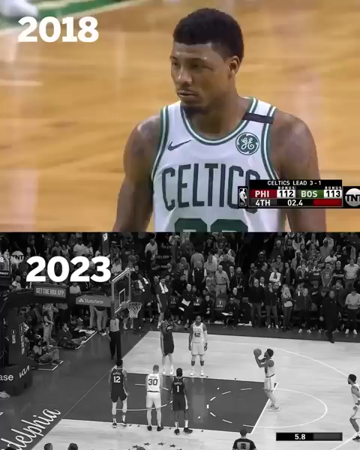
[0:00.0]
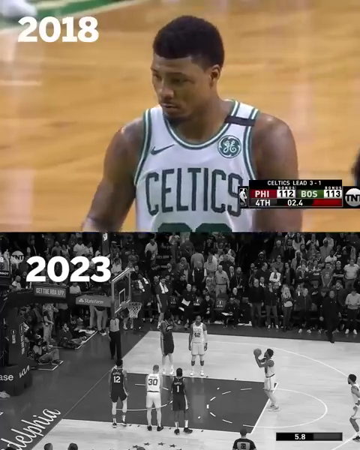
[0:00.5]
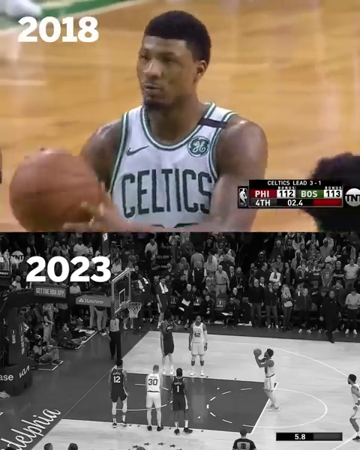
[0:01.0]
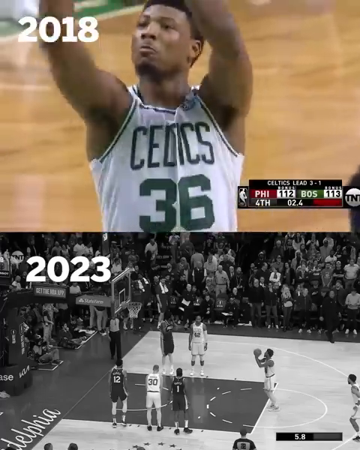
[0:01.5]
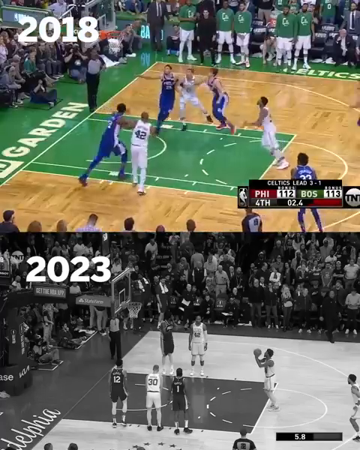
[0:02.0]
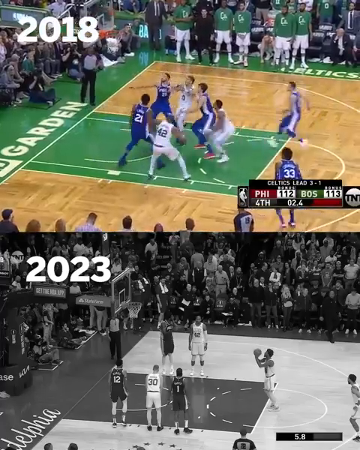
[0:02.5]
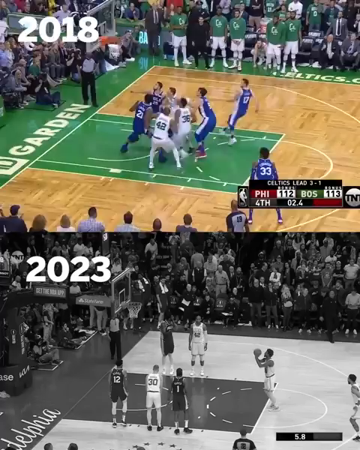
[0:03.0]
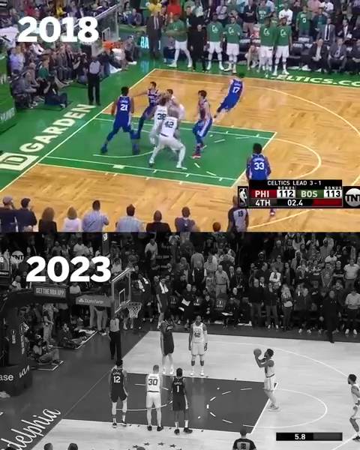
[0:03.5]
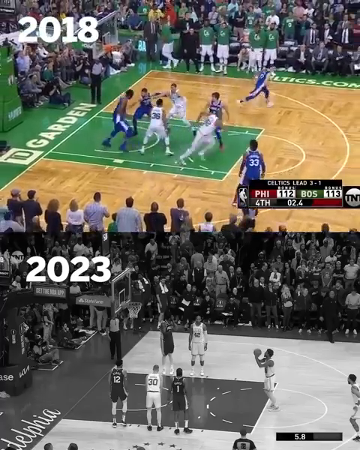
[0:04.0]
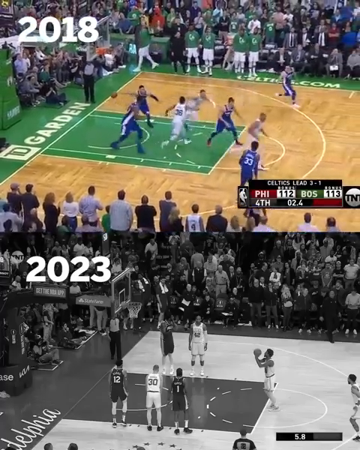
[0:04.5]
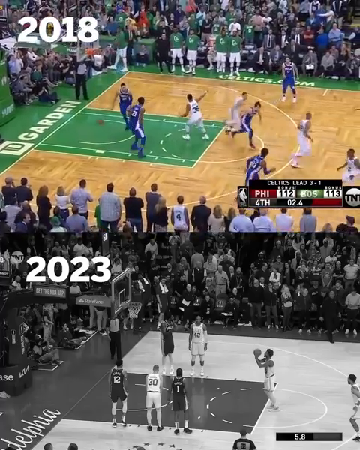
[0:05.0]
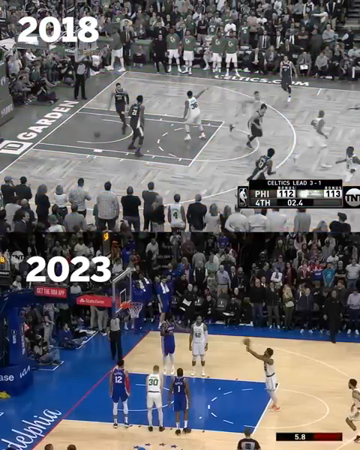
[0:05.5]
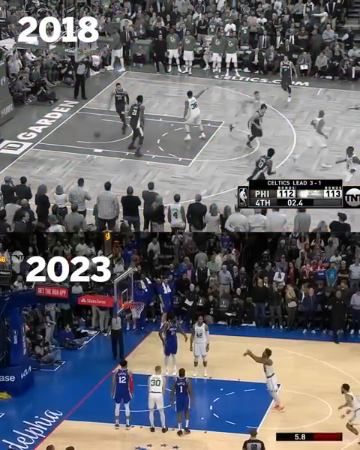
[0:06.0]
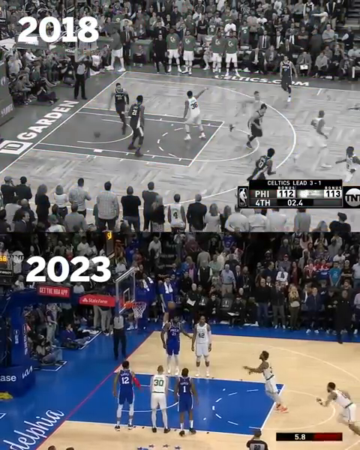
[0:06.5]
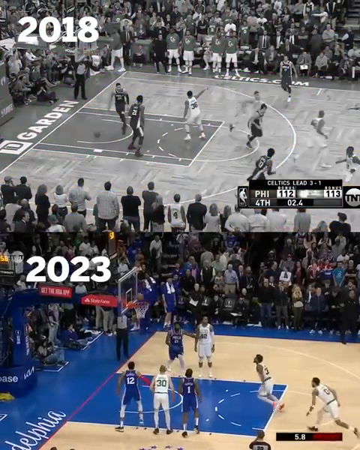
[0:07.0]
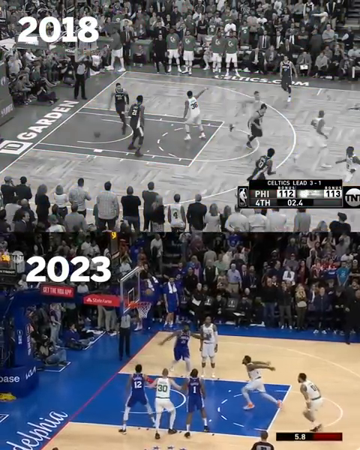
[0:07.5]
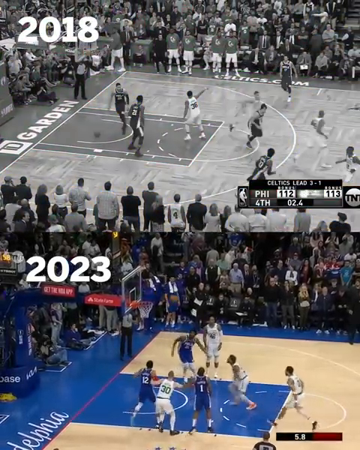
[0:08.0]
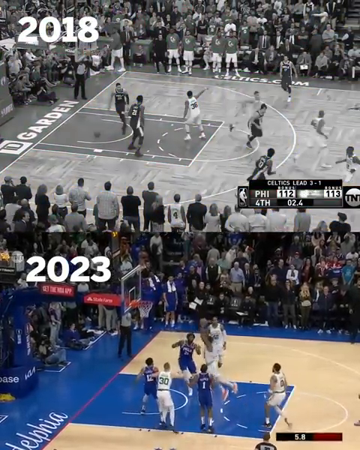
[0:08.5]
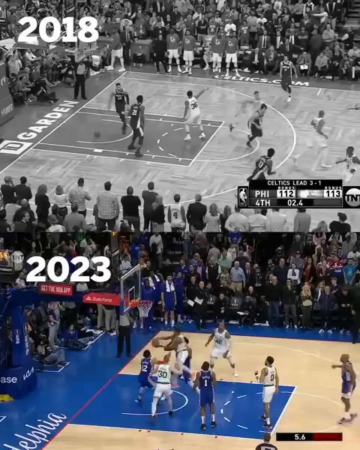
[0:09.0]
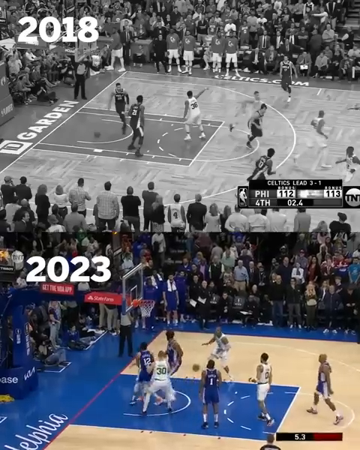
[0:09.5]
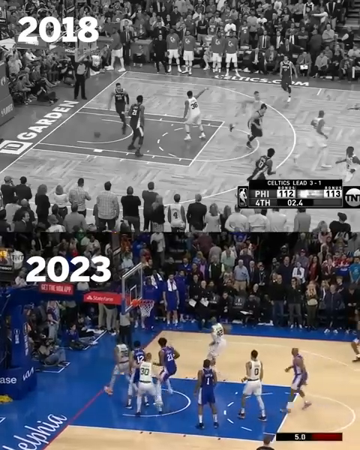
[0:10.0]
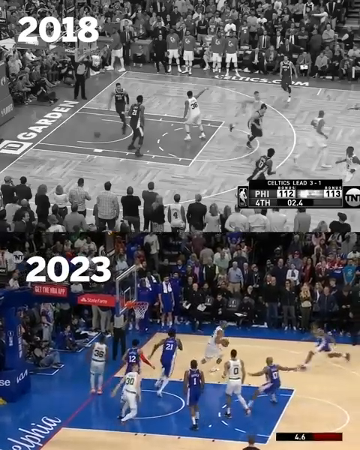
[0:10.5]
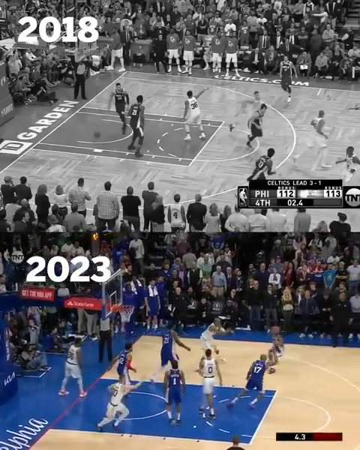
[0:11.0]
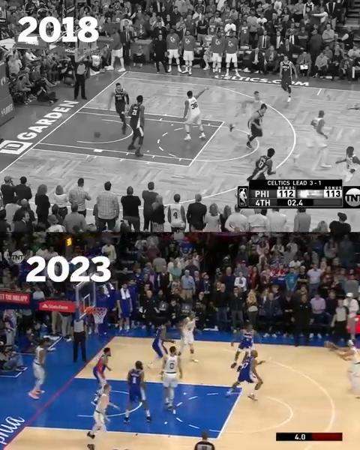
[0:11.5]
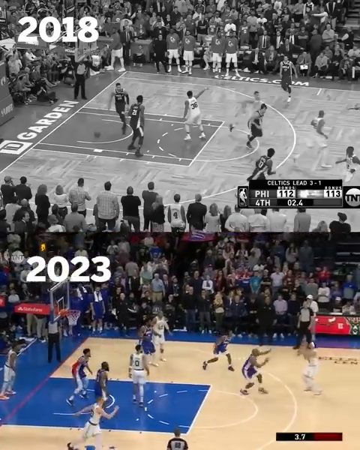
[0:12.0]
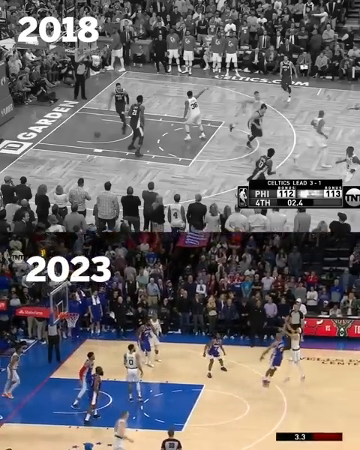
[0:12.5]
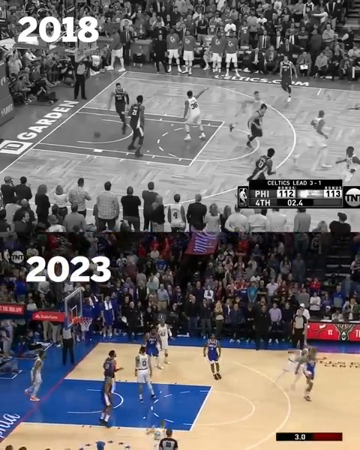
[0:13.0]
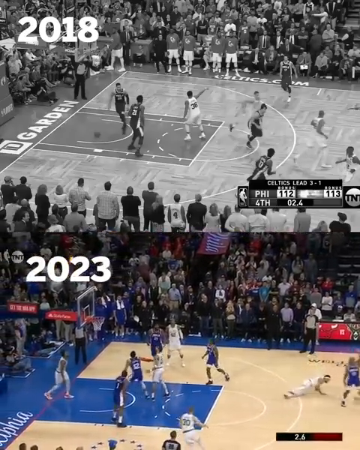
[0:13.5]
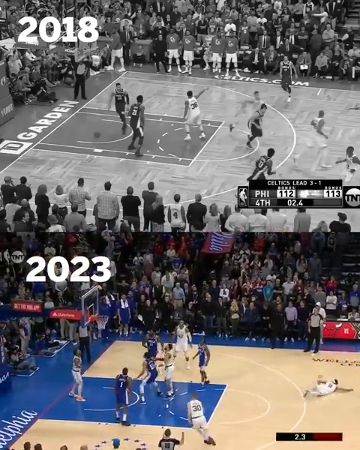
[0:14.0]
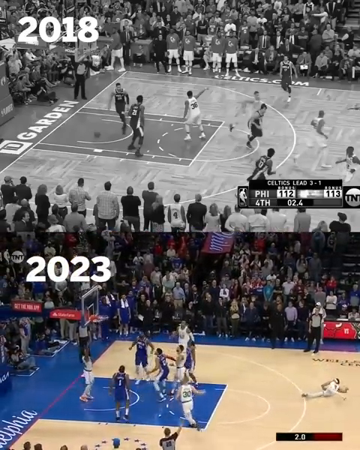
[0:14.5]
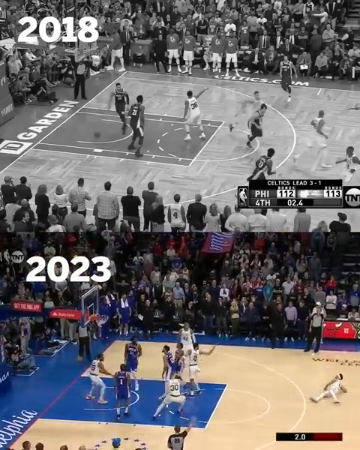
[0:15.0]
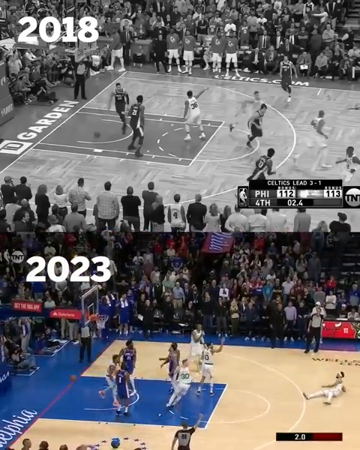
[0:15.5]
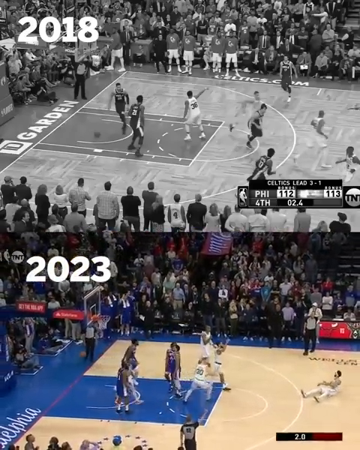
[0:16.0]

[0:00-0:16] Two clips are shown, one labeled "2018" and the other "2023." The top one is in black and white and the bottom one is in color. The image then morphs into a picture of somebody taking a free throw on the top, while the bottom shows a colored picture of someone taking a free throw, and he makes the ball. Next, someone shoots a three-pointer and makes the basket. The video goes back to the jump shot, then the players pass the ball around a couple of times, and the guy in the white uniform under 2023 makes the jump shot. It goes back to the jump shot and the passing of the ball, and someone makes the three-pointer. Then it shows 2018. The clips possibly show the same player making a free throw in 2018 and a three-pointer in 2023.